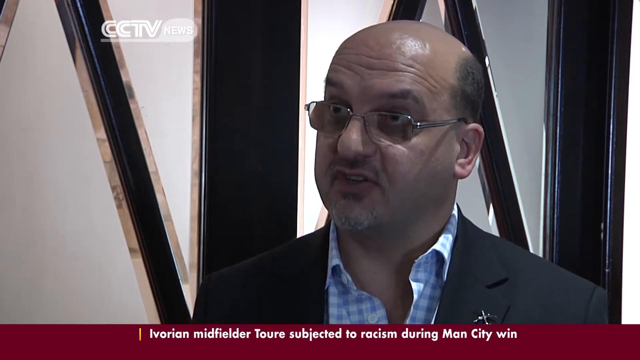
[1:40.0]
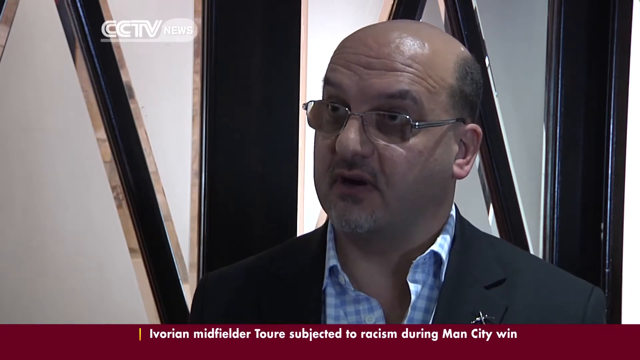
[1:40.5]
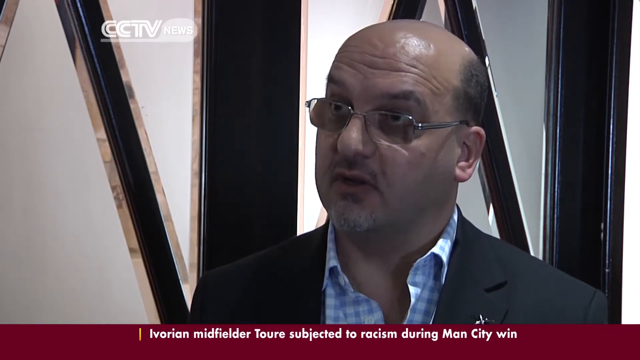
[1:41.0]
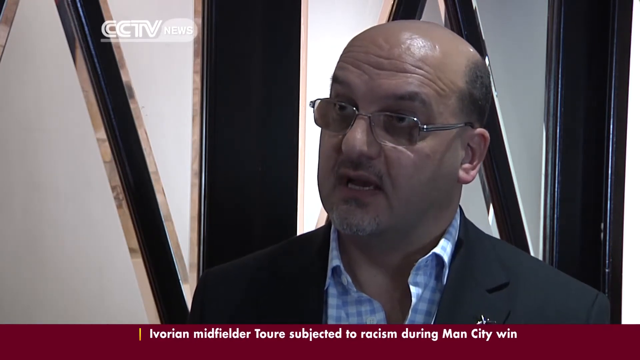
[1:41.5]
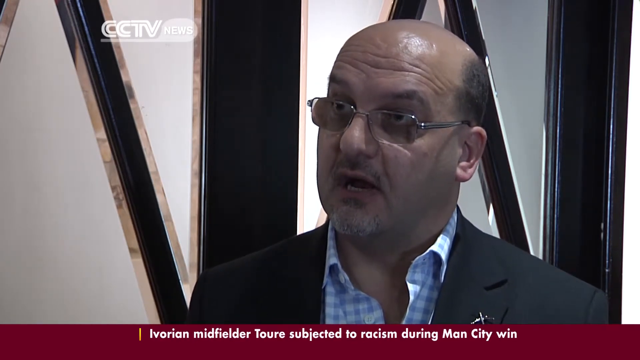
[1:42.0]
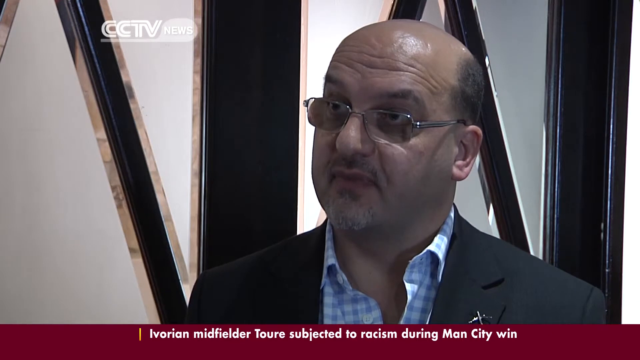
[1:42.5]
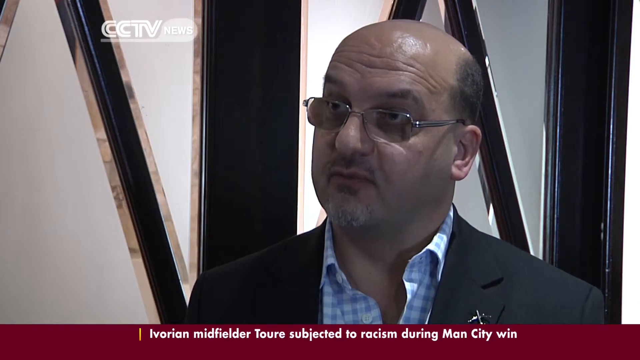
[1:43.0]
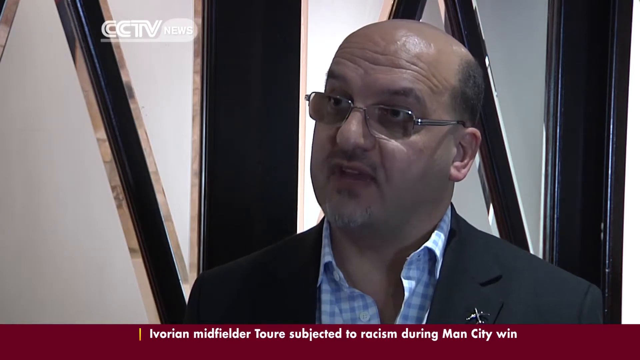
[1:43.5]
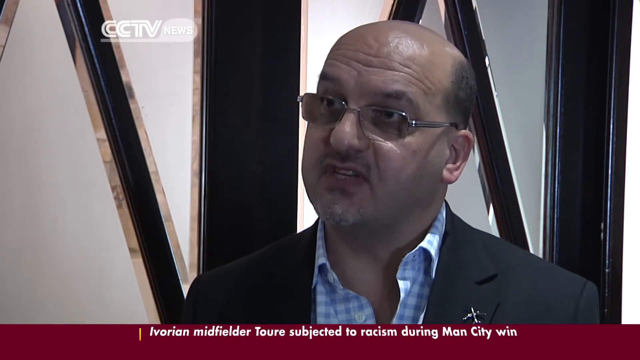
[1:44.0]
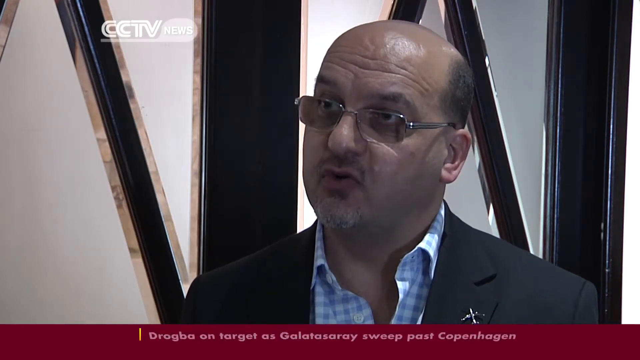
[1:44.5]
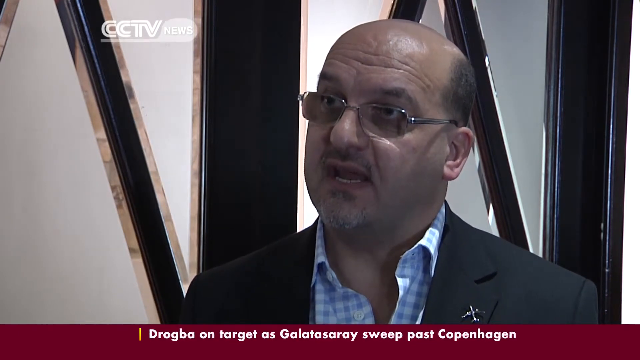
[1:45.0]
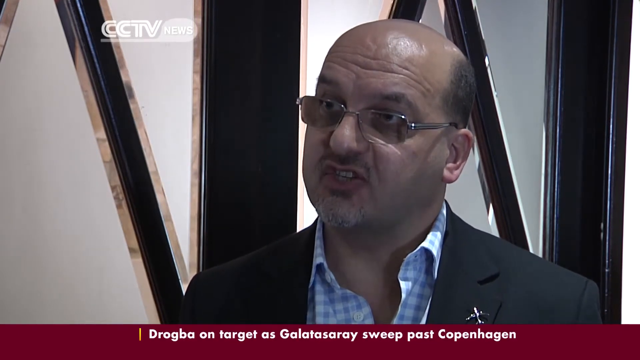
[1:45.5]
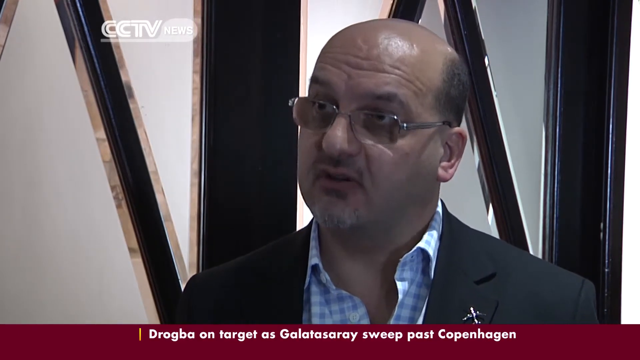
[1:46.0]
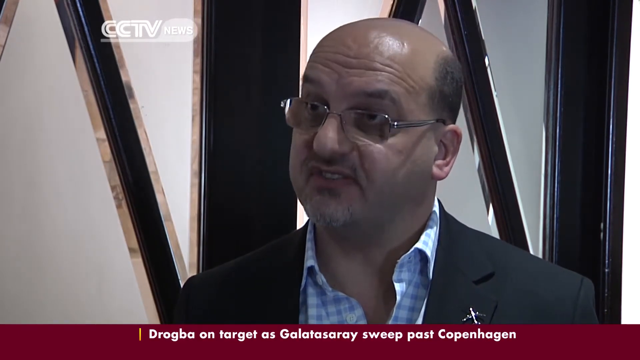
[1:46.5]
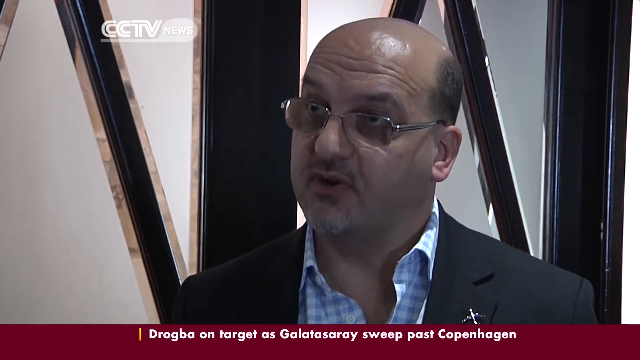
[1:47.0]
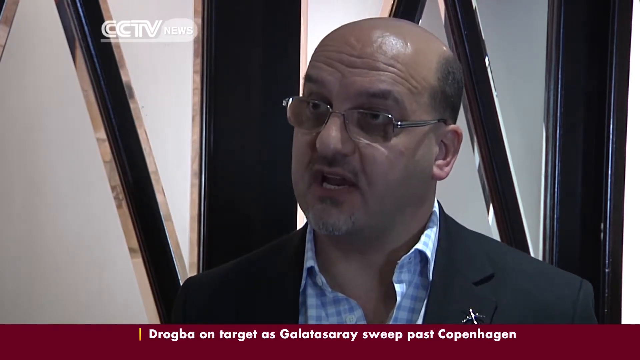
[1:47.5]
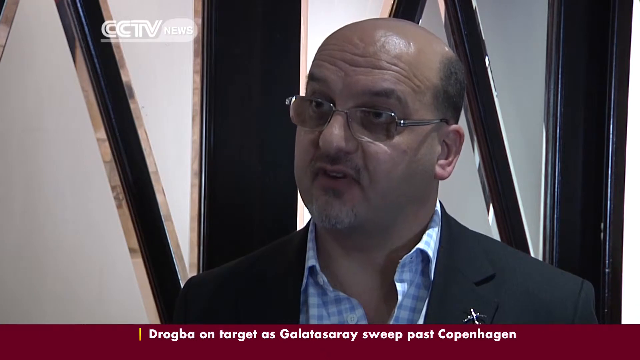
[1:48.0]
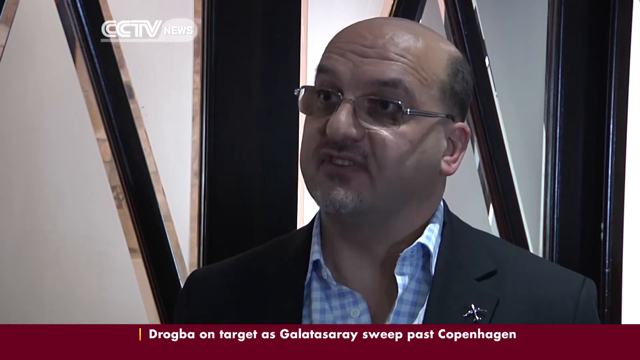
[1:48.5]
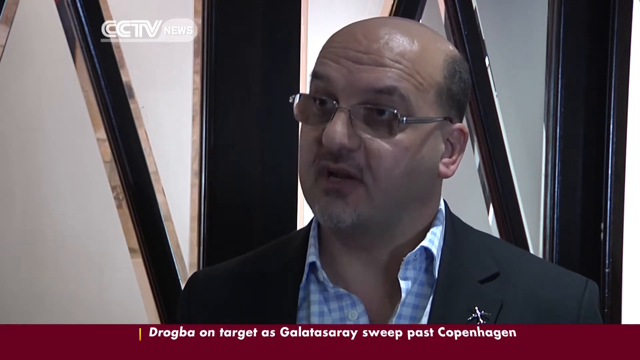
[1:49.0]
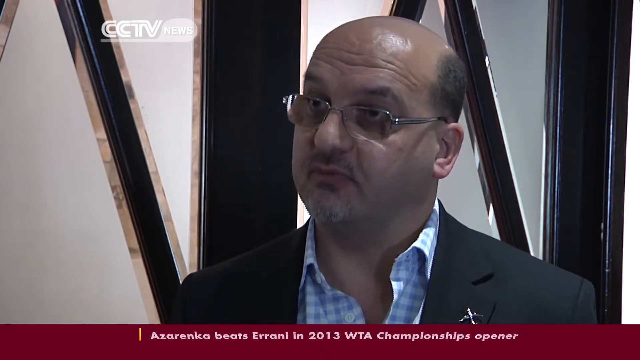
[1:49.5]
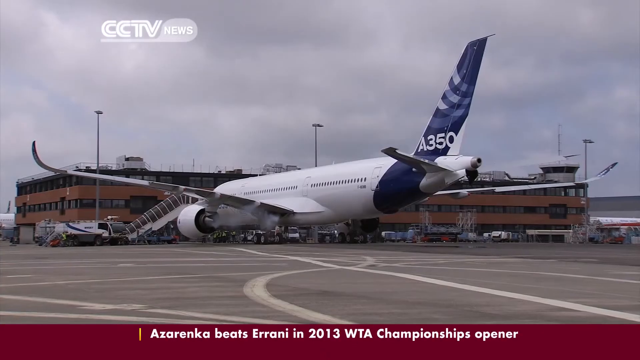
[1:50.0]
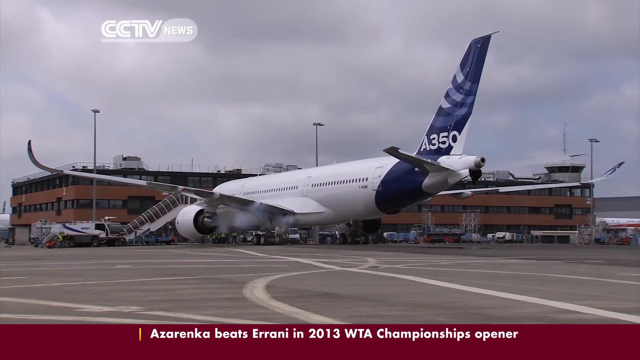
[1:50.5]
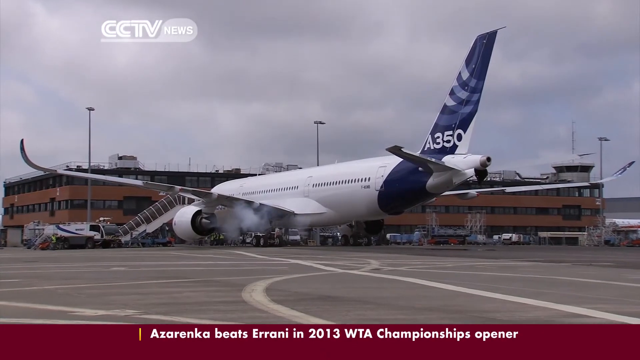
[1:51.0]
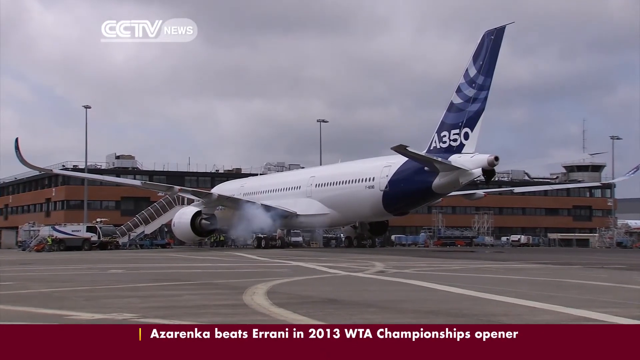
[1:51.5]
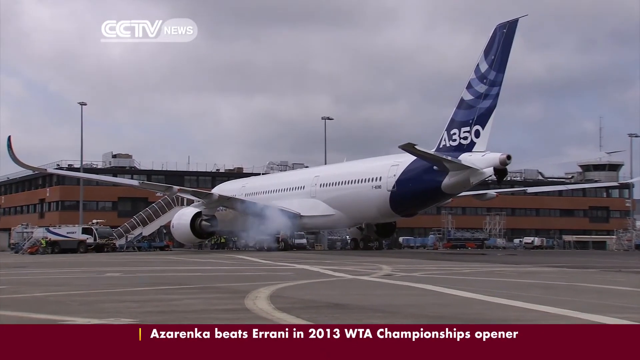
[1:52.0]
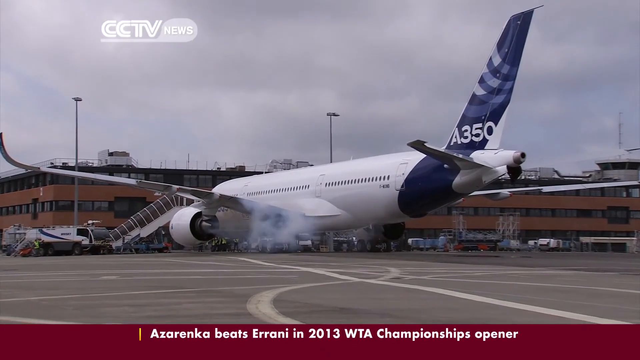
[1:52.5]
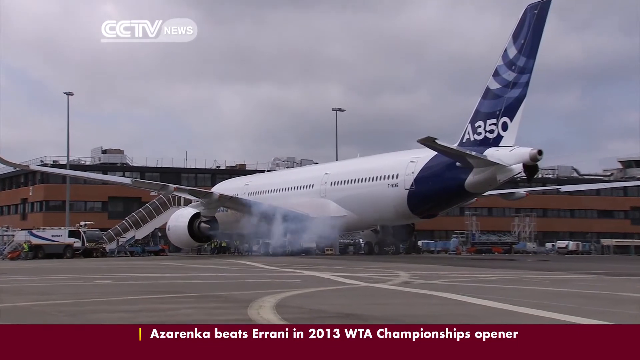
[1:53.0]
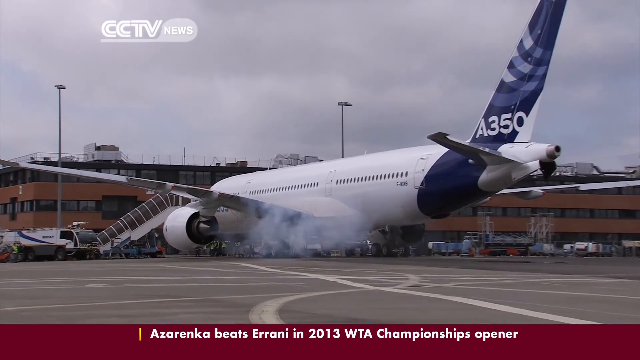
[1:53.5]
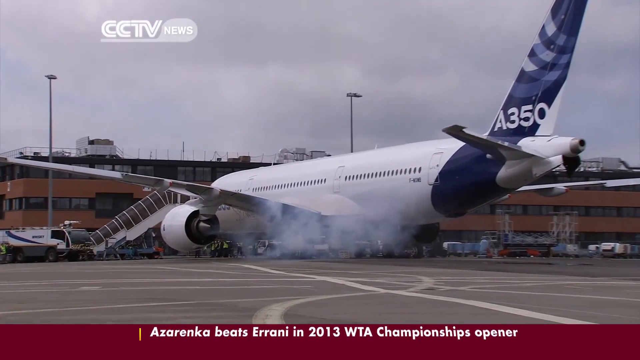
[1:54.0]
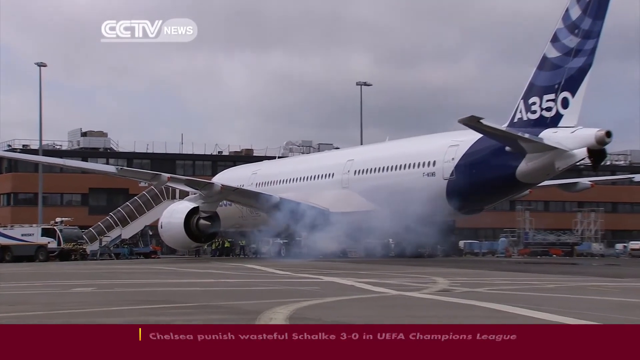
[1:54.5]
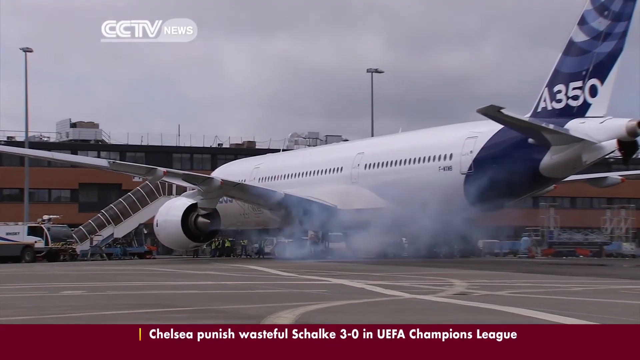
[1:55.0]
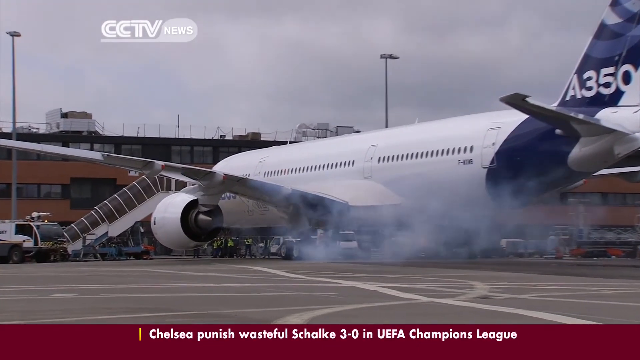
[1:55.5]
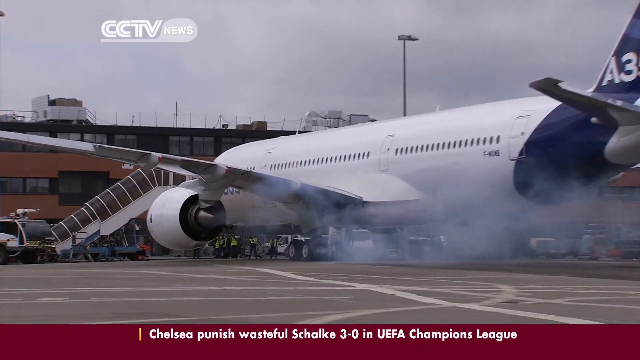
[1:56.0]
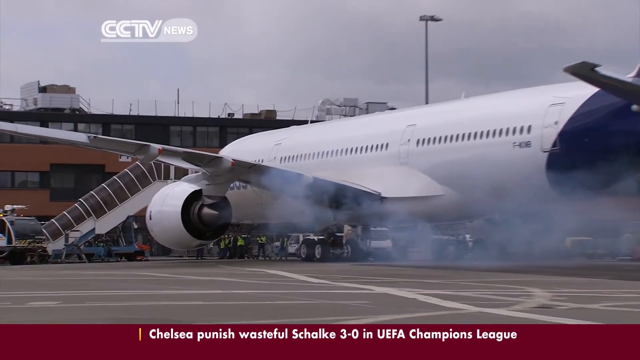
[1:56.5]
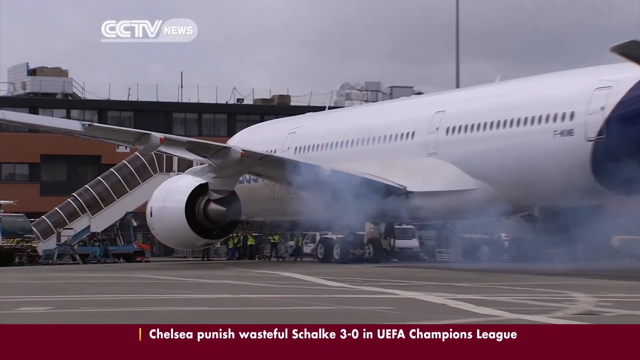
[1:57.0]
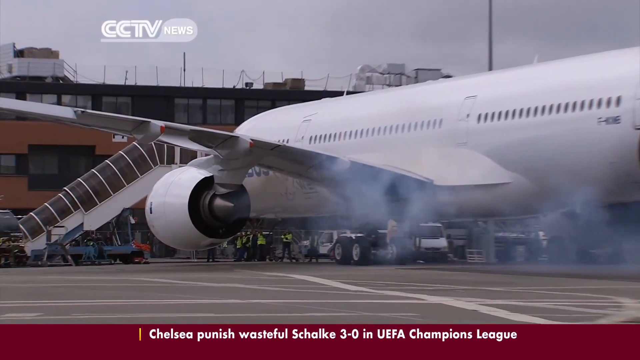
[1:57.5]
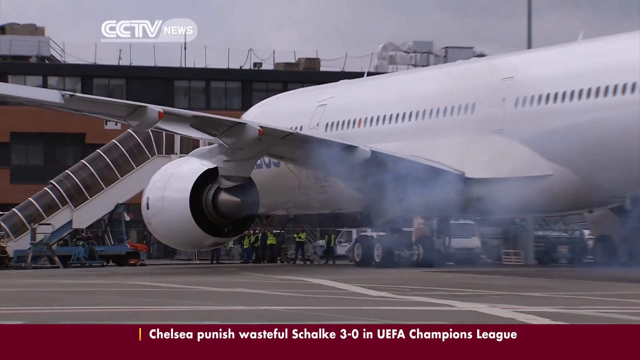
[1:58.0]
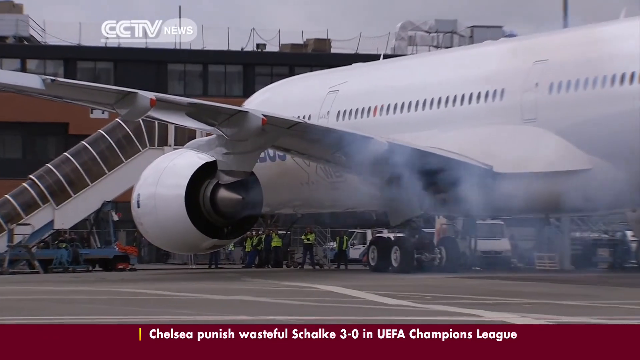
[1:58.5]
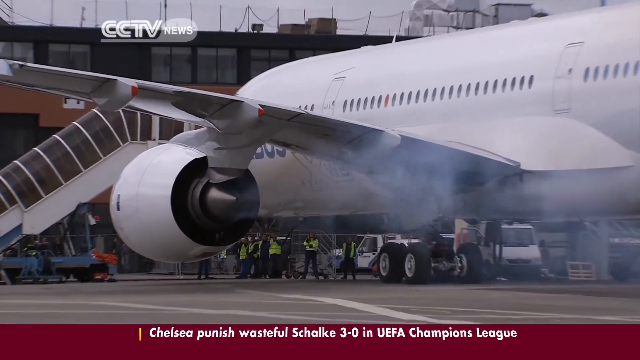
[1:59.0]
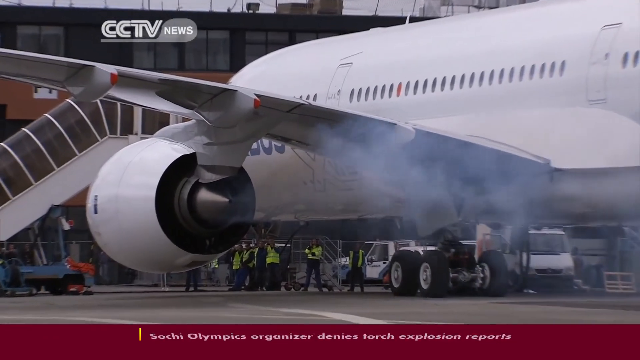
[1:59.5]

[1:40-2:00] The man from Airbus talks. He wears glasses with transitional lenses, is bald with a little very short hair on the sides, and has a small mustache and a neatly trimmed little beard. He wears a blue suit coat over a blue and white checkered shirt unbuttoned two buttons, and he does not look very happy. The video then switches to an Airbus with a lot of smoke coming out of one of its engines; the engine is not on fire, just smoking. Many workmen stand around watching the smoke pour out. The plane is right by the terminal.